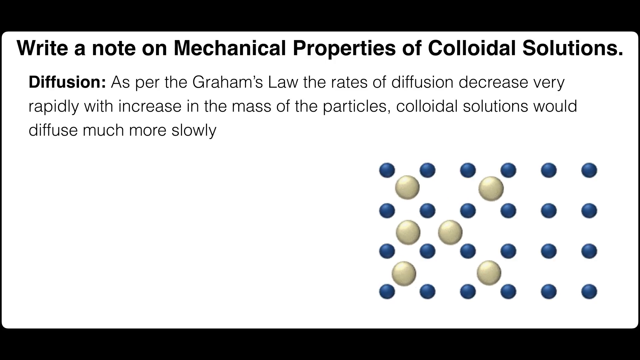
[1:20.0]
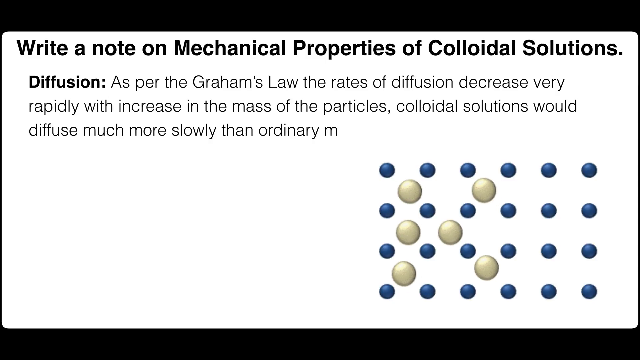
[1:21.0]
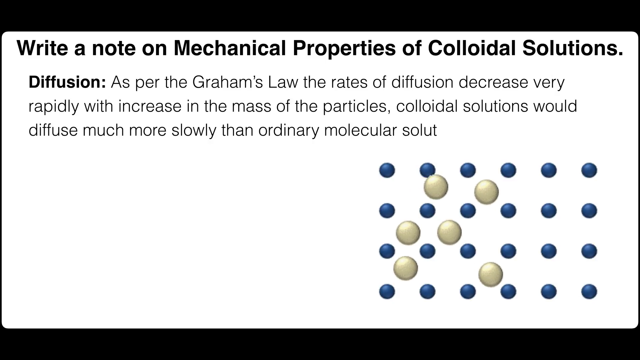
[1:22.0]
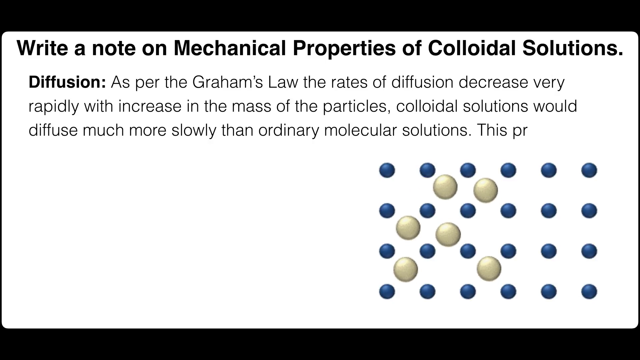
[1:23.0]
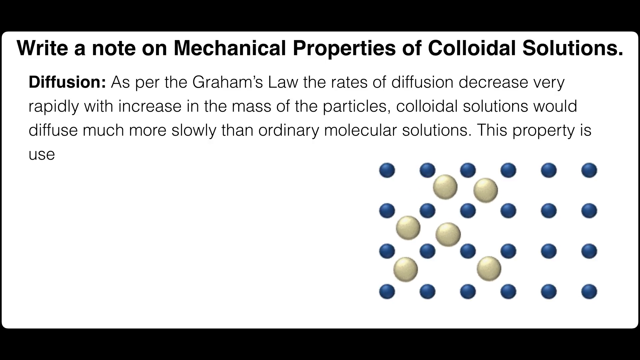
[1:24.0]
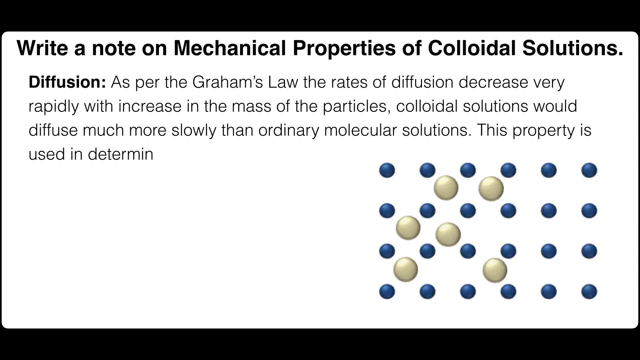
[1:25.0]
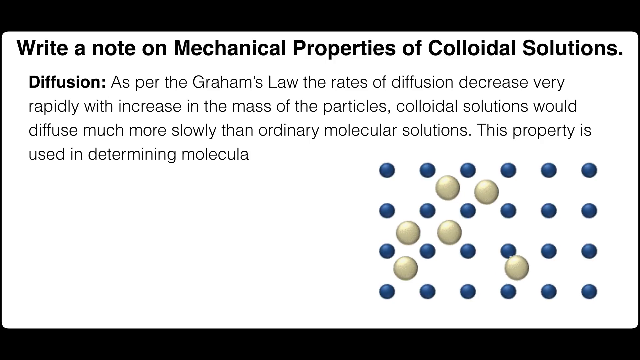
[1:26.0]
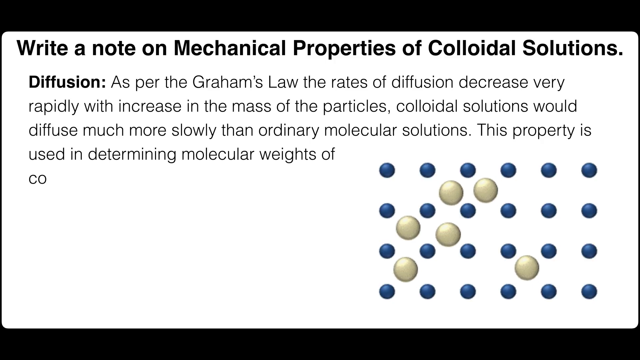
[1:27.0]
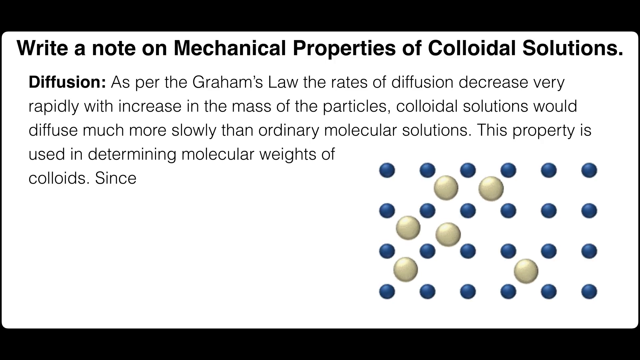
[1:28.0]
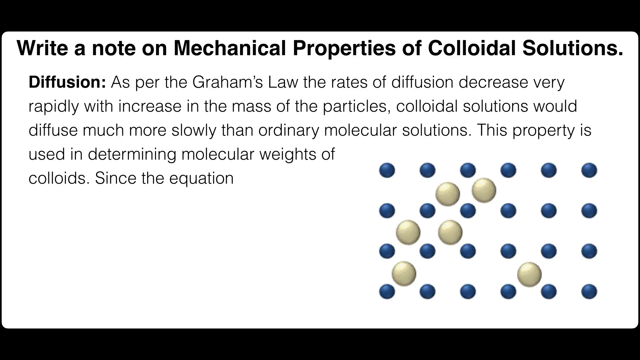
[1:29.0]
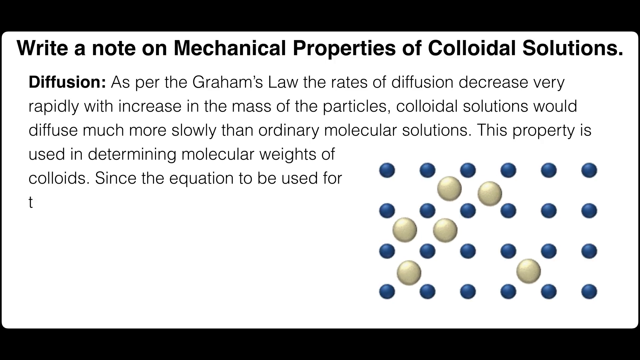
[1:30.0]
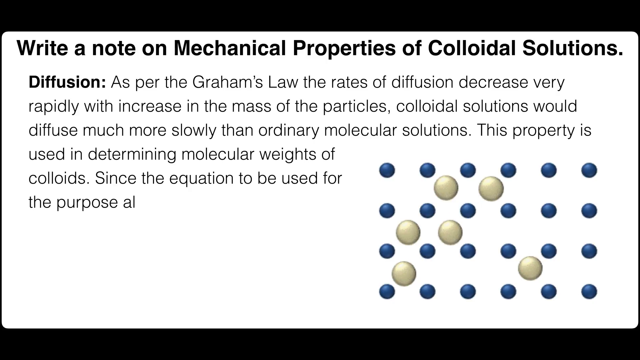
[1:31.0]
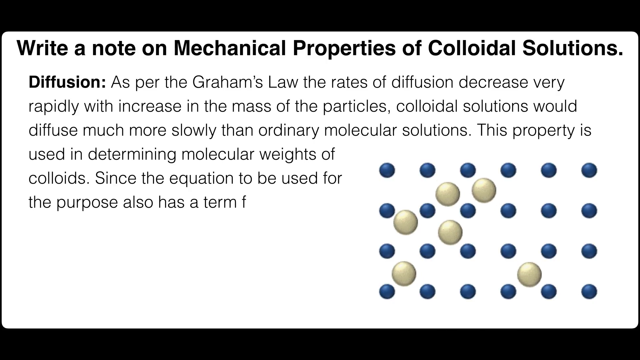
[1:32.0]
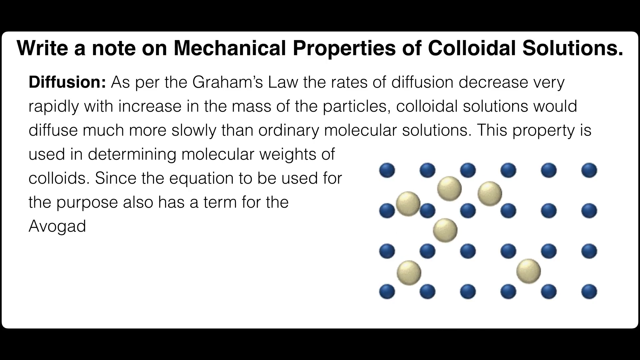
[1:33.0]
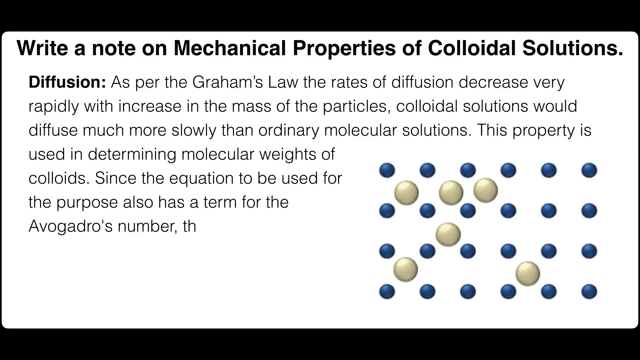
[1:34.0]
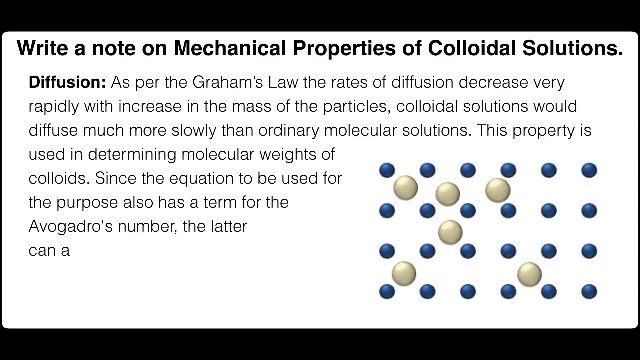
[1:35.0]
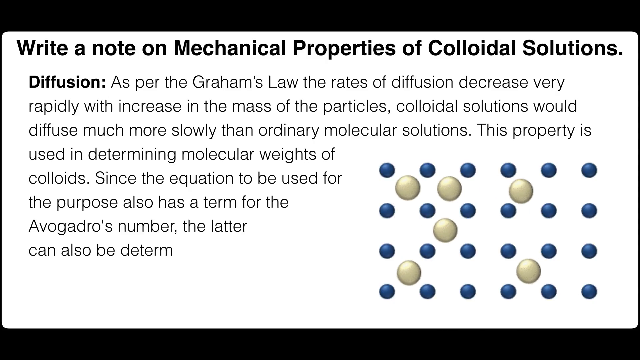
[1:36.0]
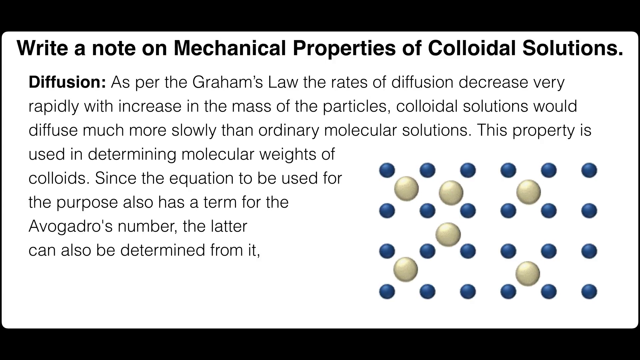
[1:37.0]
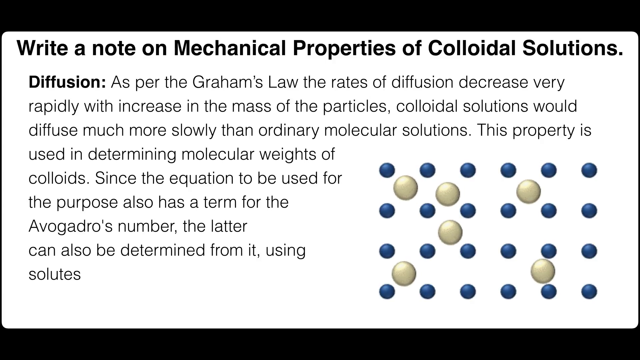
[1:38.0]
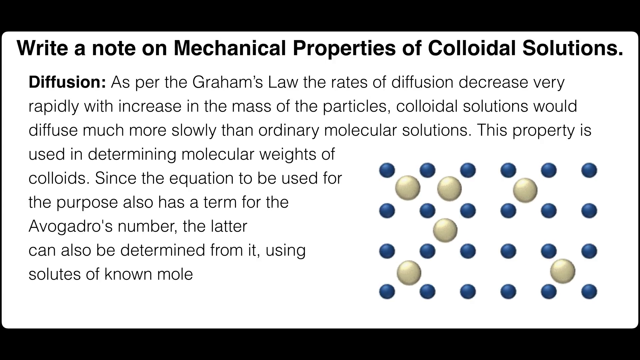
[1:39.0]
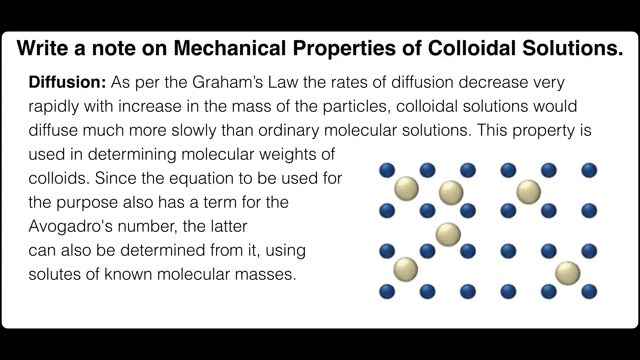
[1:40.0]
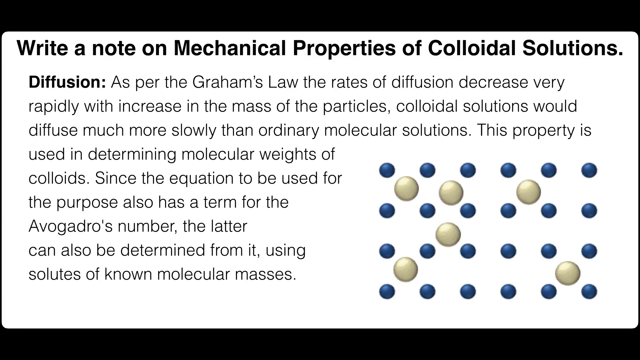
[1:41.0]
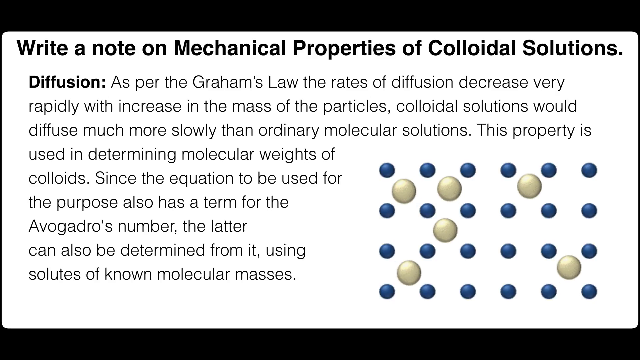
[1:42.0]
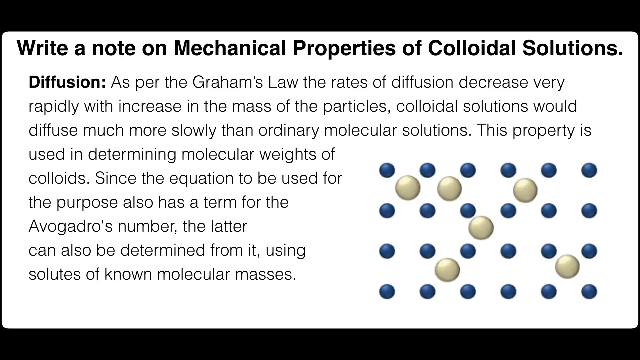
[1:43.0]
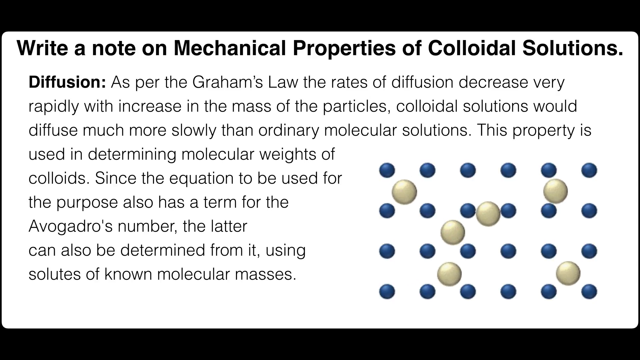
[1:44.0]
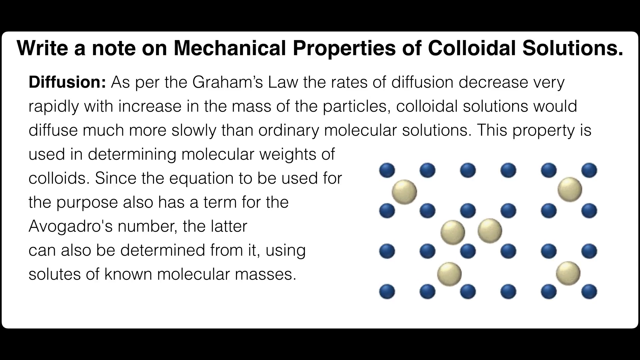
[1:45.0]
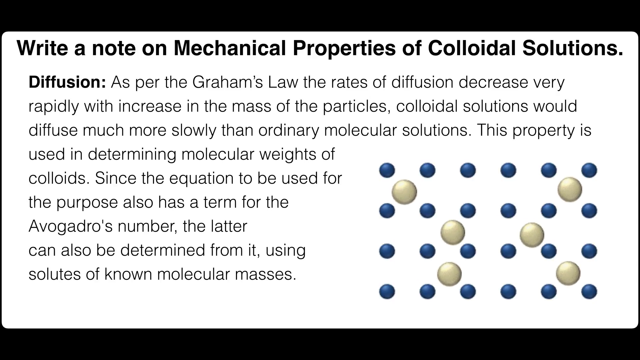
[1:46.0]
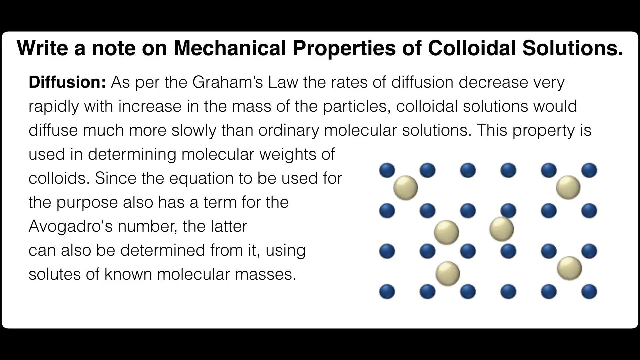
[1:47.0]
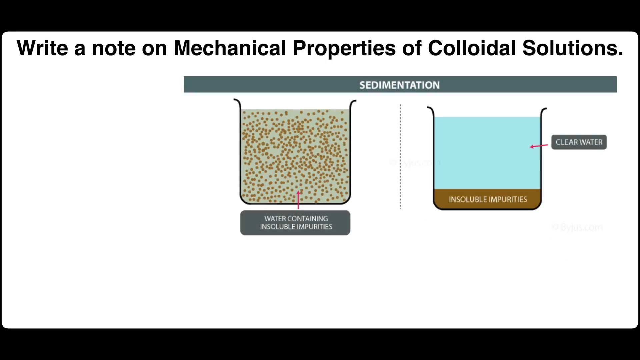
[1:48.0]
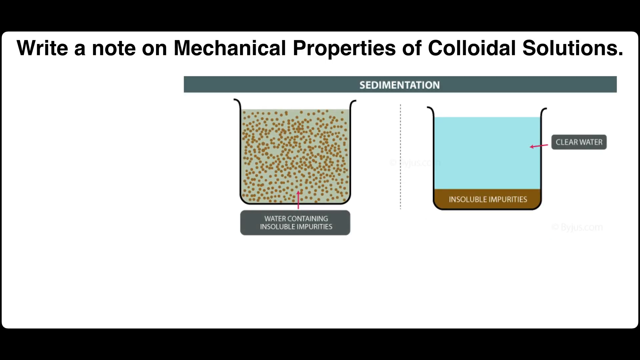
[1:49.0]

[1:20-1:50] The slide shows the heading "write a note on mechanical properties of colloidal solutions", and just under it the word "diffusion" with an explanation of diffusion, covering Graham's Law and how colloidal solutions diffuse much more slowly than ordinary molecular solutions. In the bottom right corner is a demonstration of colloidal particles of two different sizes, illustrating diffusion.